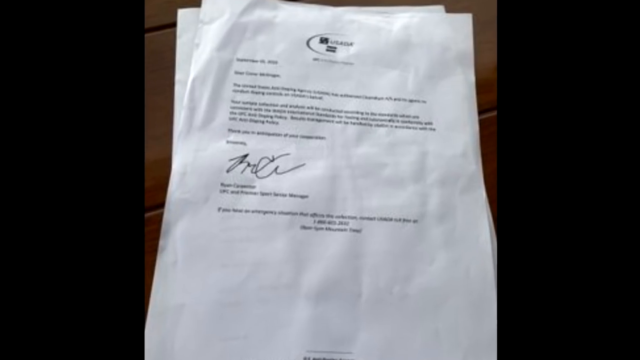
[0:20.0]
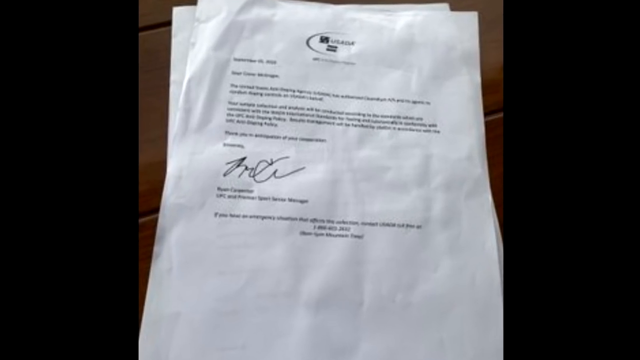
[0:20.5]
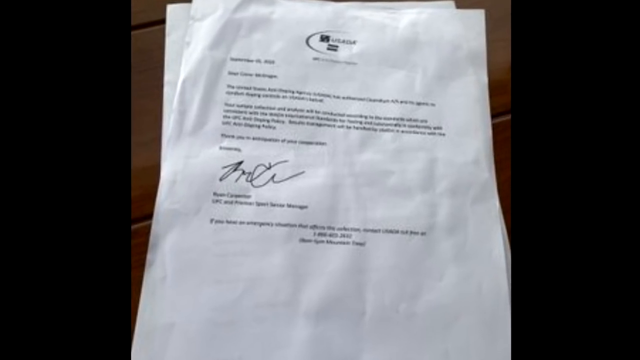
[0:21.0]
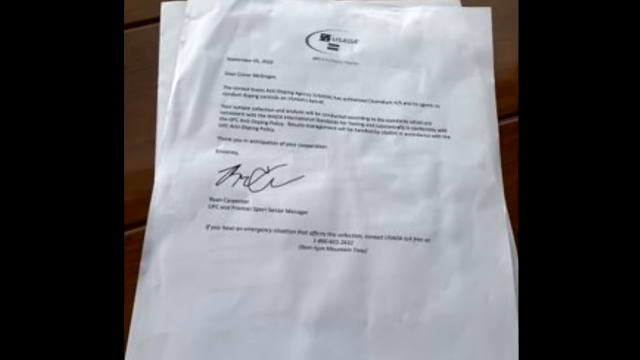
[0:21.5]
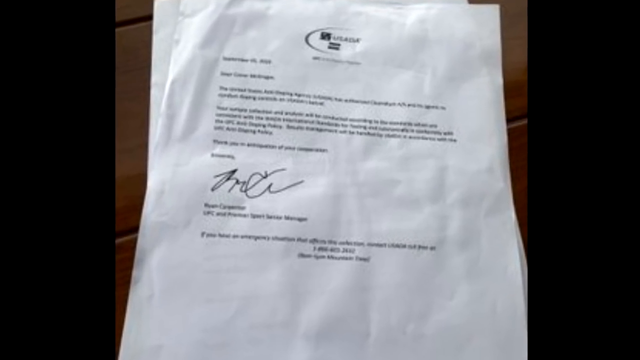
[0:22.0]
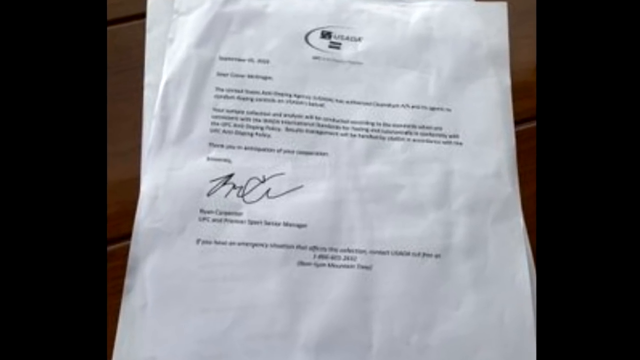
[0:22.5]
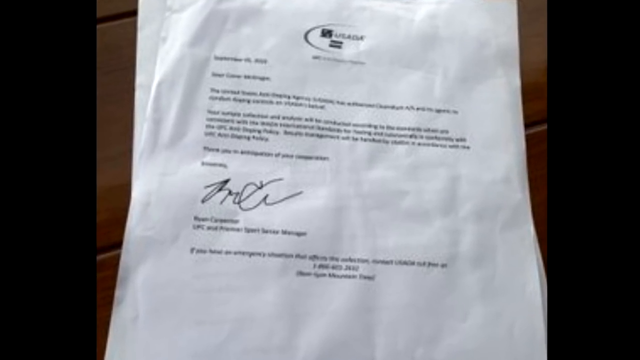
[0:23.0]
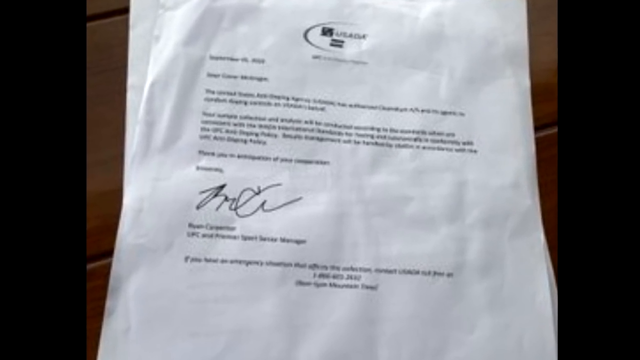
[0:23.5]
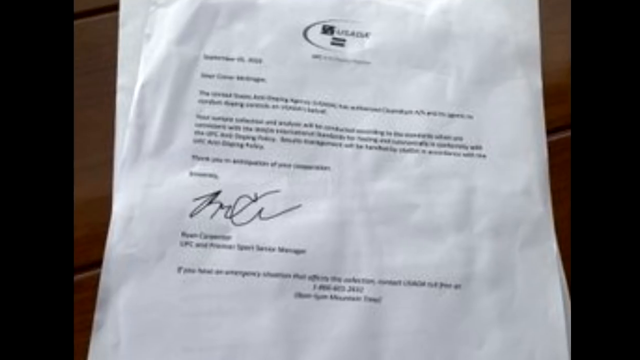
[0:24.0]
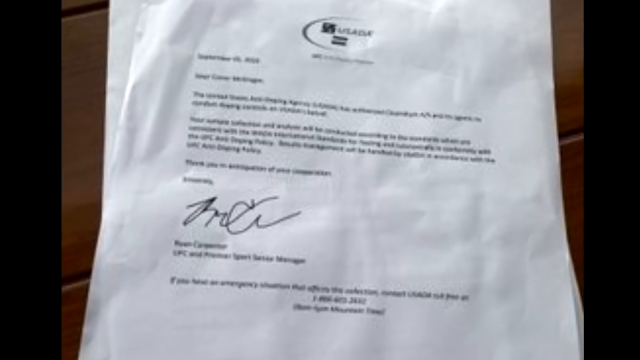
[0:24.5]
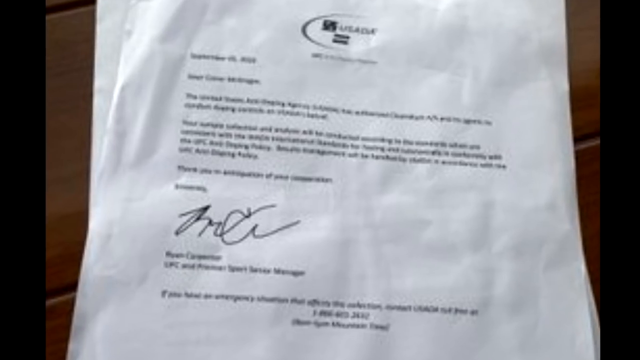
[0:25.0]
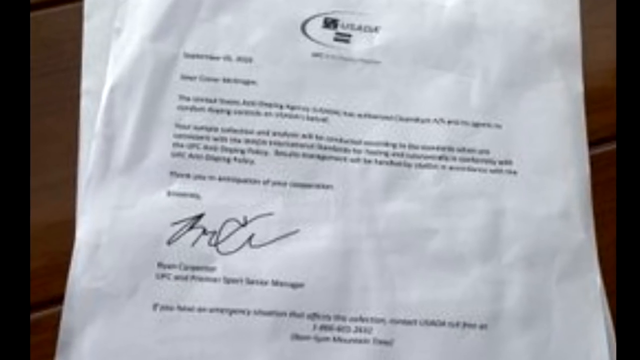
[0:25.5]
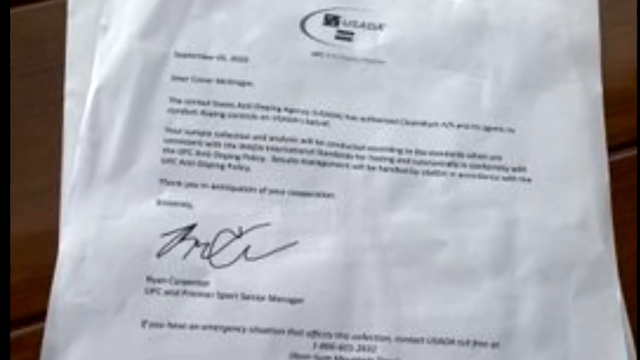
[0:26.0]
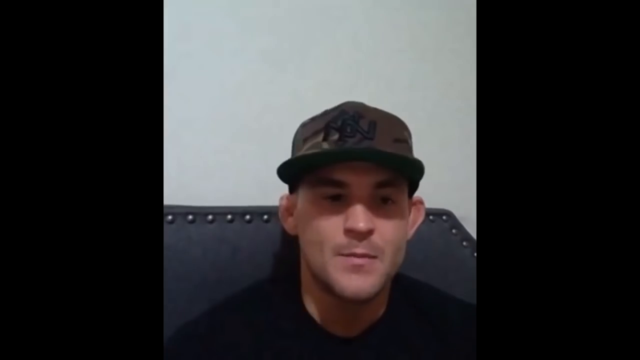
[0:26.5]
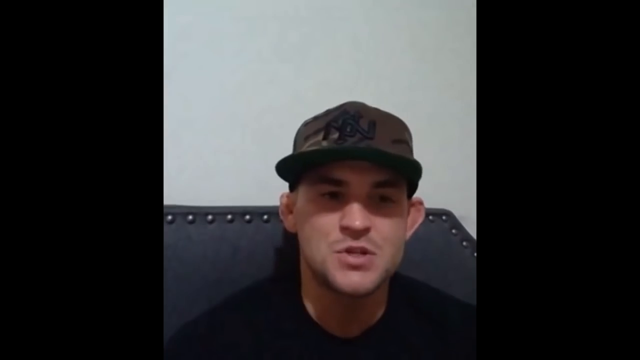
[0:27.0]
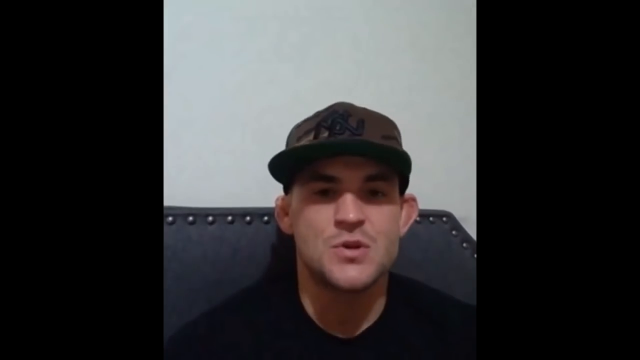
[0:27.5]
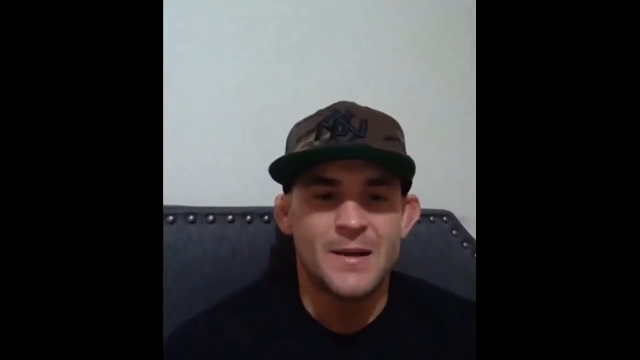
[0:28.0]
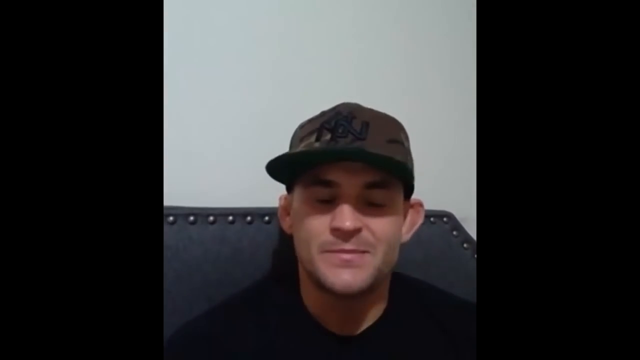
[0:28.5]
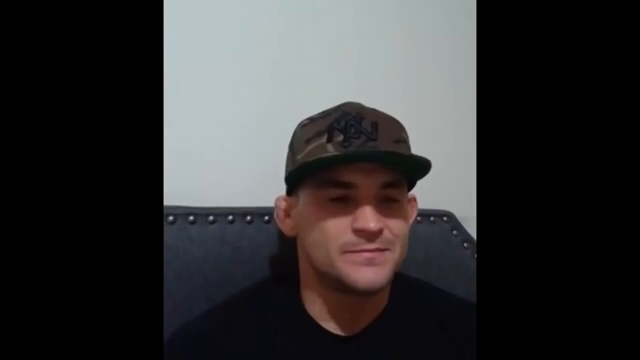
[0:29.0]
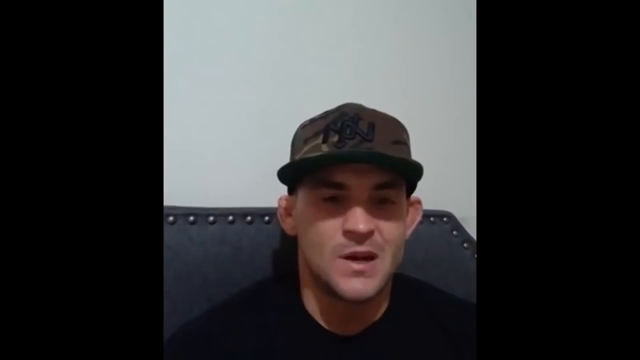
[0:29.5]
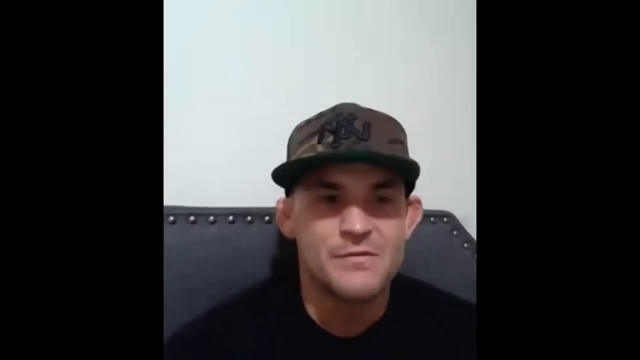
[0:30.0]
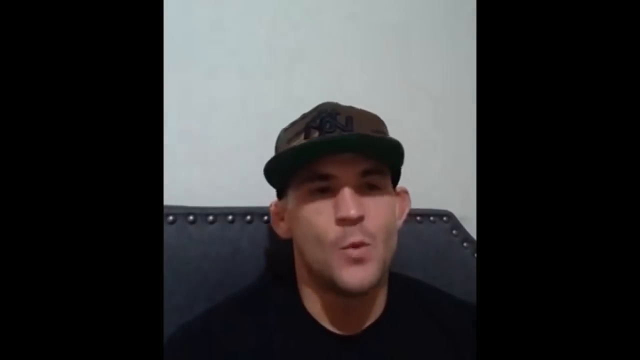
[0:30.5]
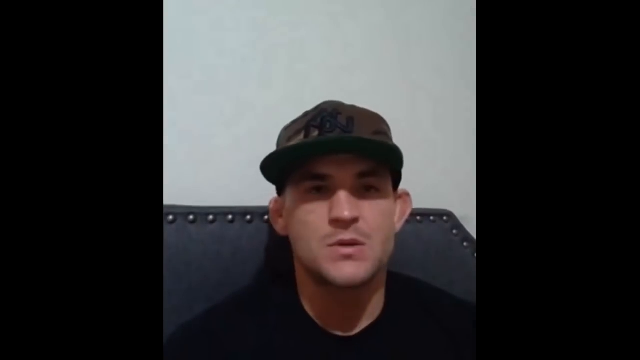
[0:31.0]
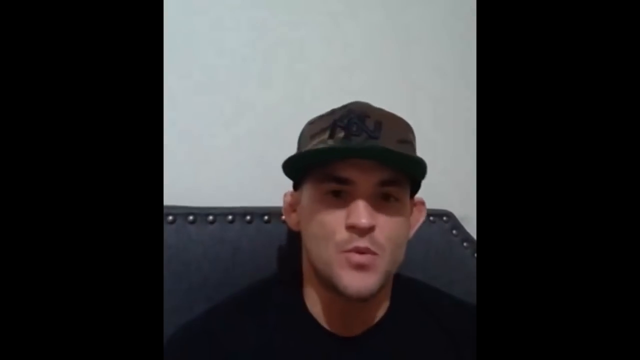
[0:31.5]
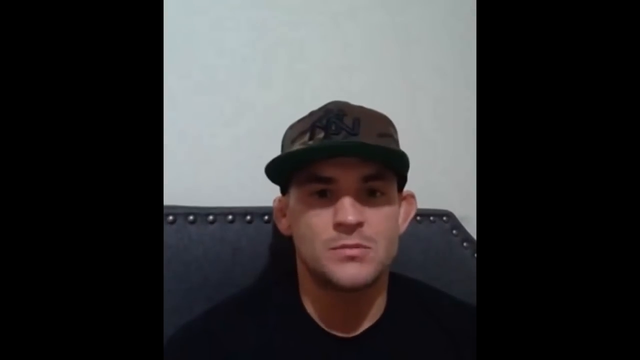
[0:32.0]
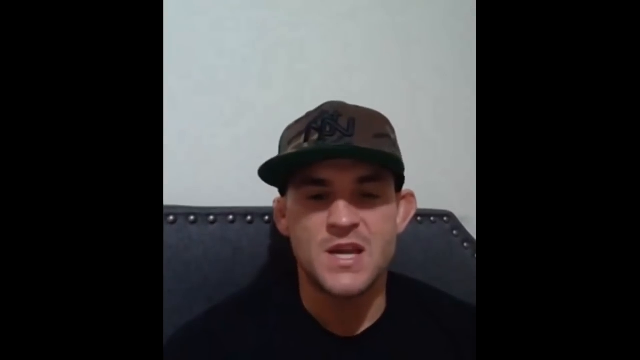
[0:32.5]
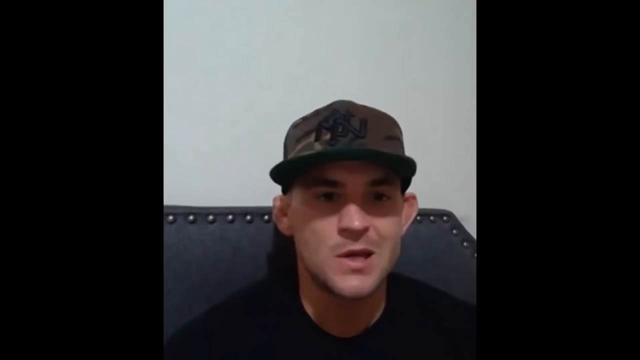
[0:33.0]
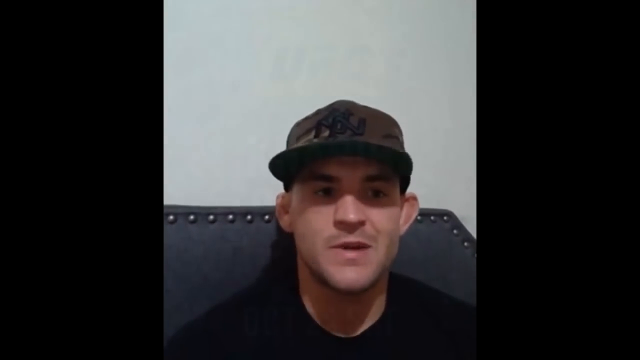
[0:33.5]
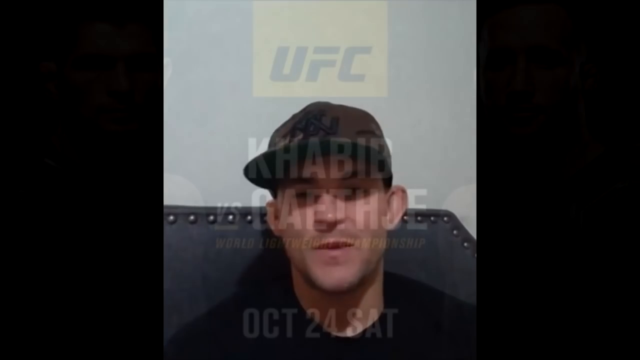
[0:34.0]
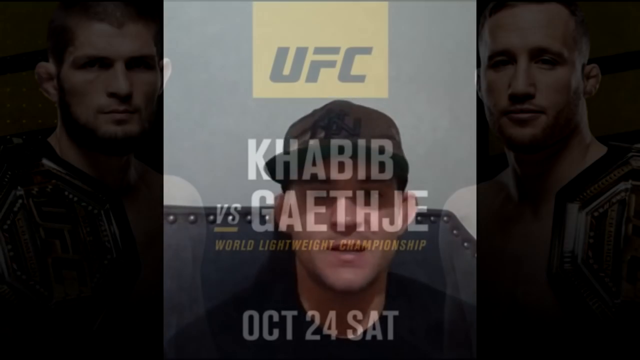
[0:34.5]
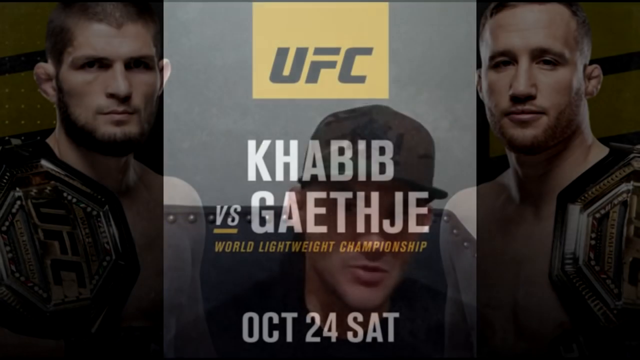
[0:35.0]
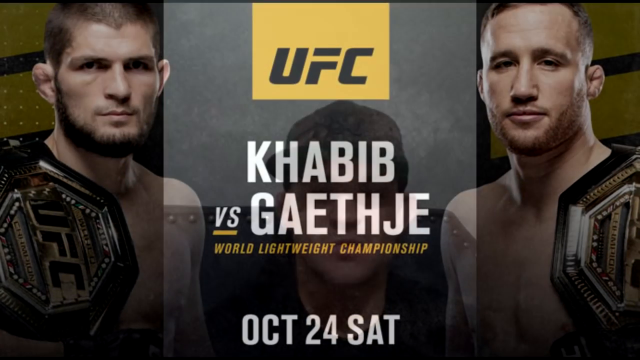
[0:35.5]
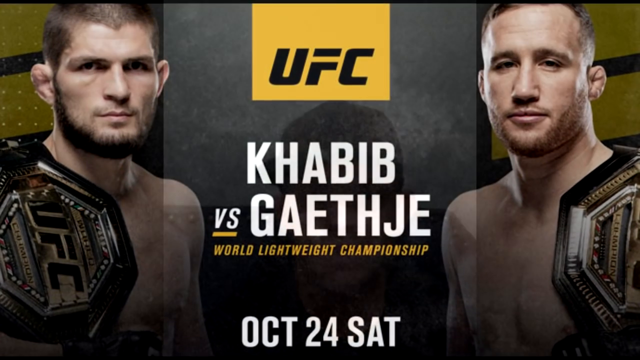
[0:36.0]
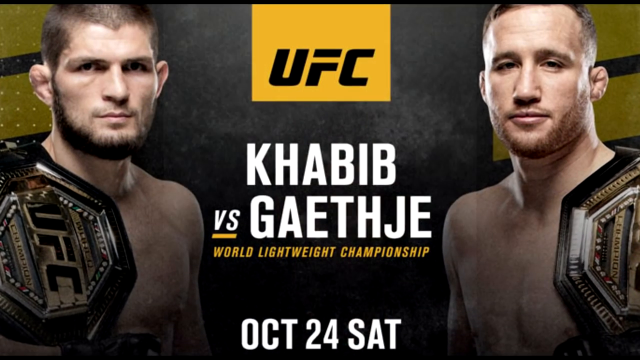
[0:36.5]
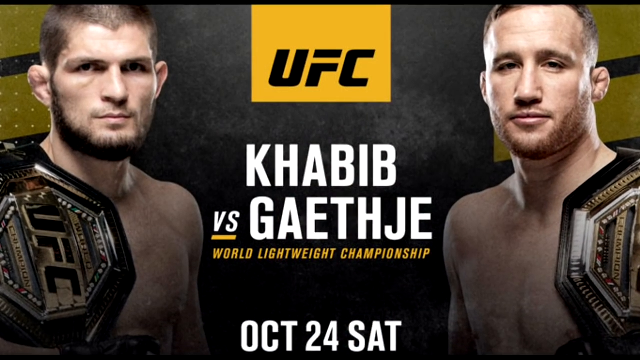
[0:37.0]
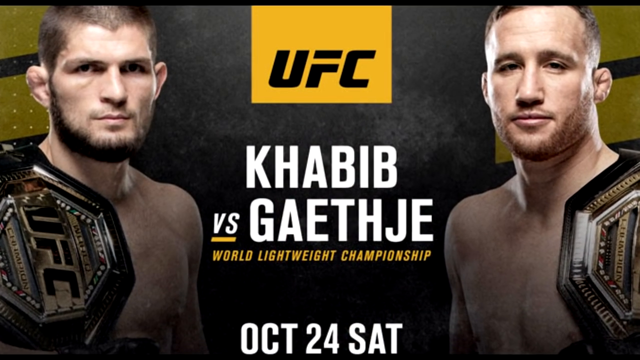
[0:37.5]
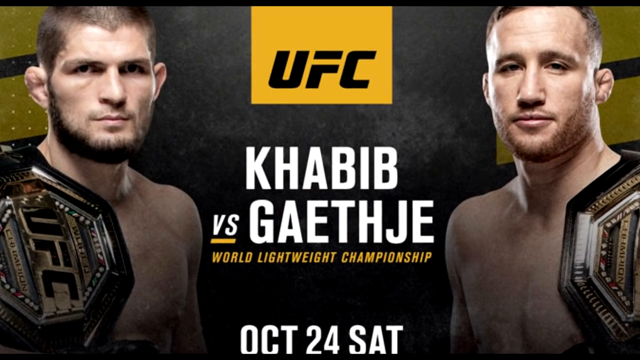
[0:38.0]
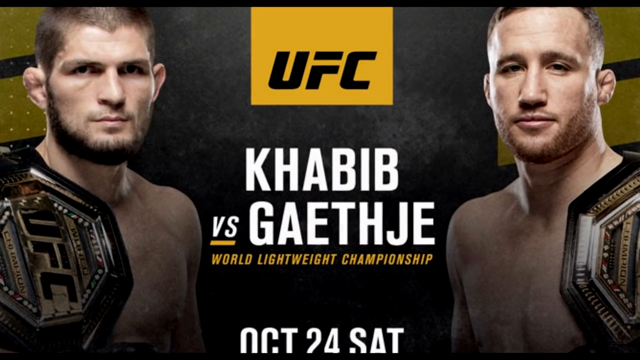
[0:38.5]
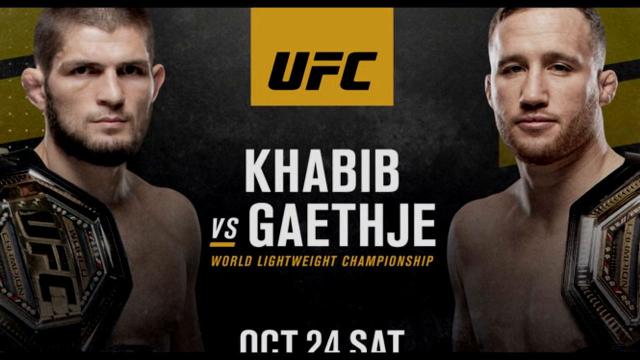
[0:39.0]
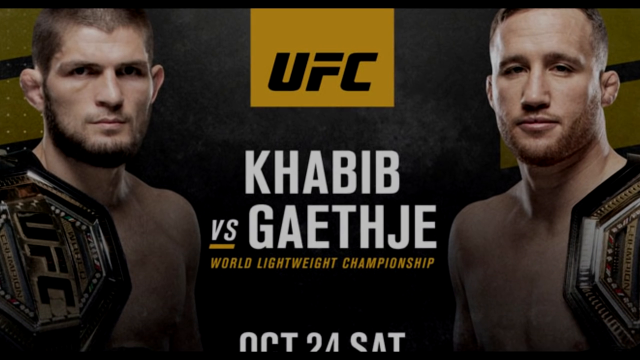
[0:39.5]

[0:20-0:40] In a wide frame, letterboxed on the left and right by about 25% on each side, two sheets of paper lie on a brown table in the center. They cannot really be read; they look typed up, are basically letters, and have a signature at the bottom. The camera slowly zooms in on them, though not enough to read them. Next, a man who is probably fairly young, probably in his 20s, maybe 30s, talks to the camera, with only his head visible. He wears a green hat with what looks like "NN" in a black outline on the front, and a black shirt. Then a promotional screen shows "Khabib versus" followed by a name spelled G-A-E-T-H-J-E in the center. Above that, "UFC" appears in black inside a yellow rectangle, and below the names, white capital letters read "World Lightweight Champion." A picture of each fighter appears, Khabib on the left and the other fighter on the right; both have a belt over their outside shoulder and lean in, looking toward the viewer.